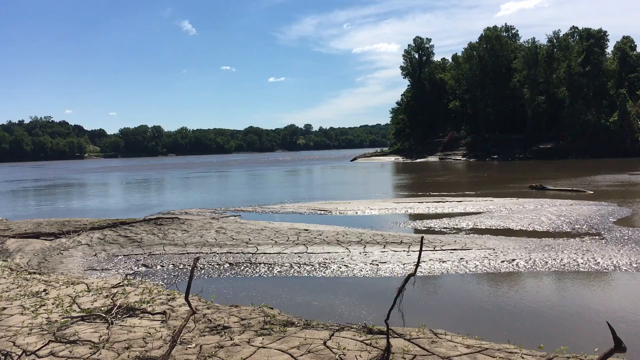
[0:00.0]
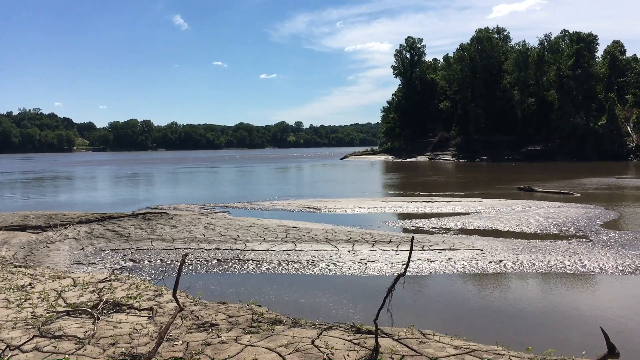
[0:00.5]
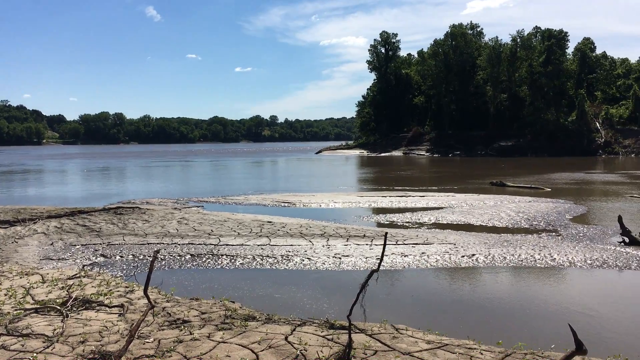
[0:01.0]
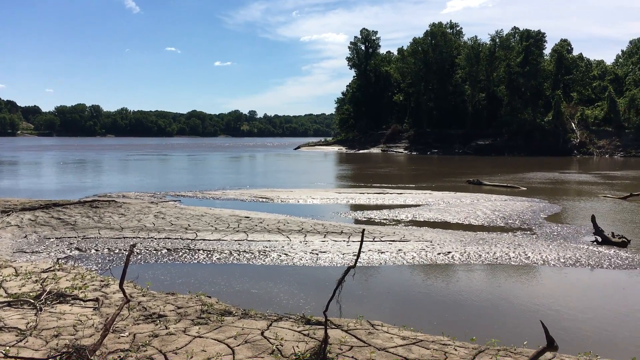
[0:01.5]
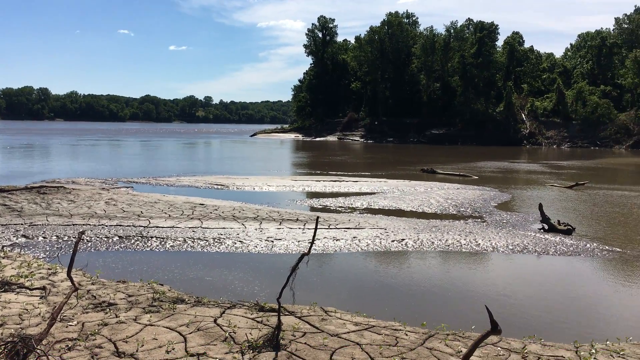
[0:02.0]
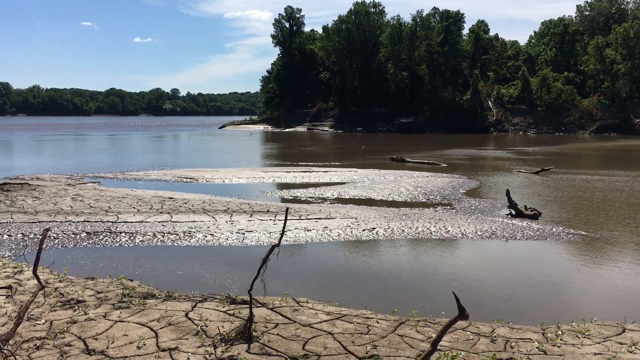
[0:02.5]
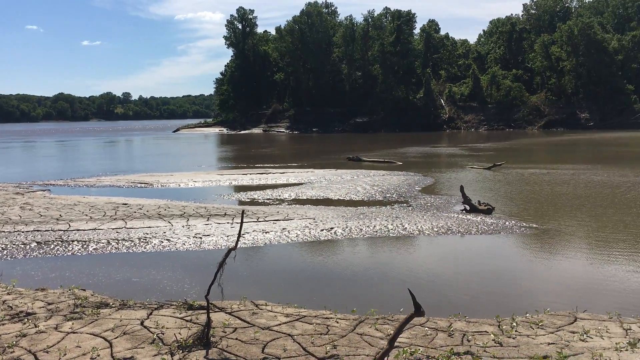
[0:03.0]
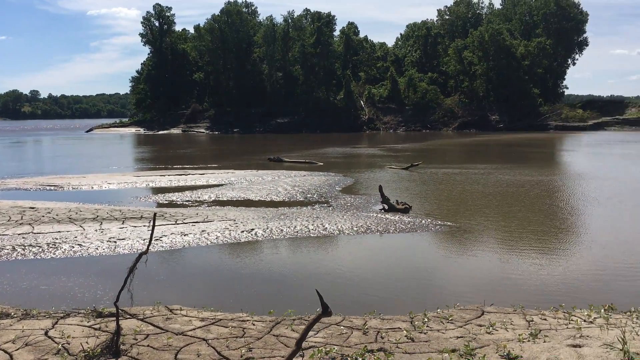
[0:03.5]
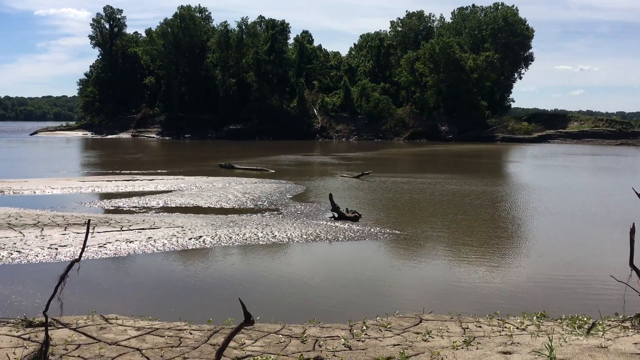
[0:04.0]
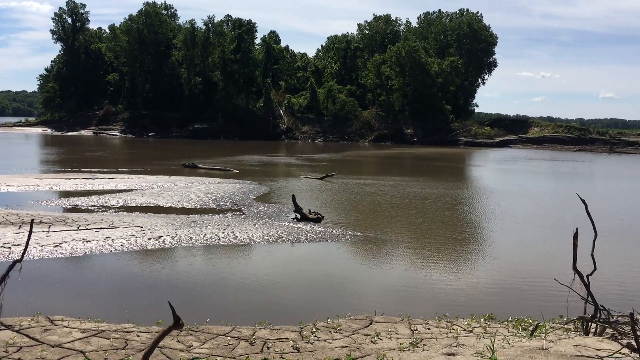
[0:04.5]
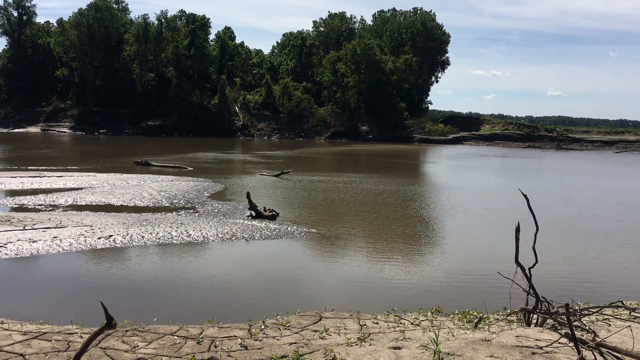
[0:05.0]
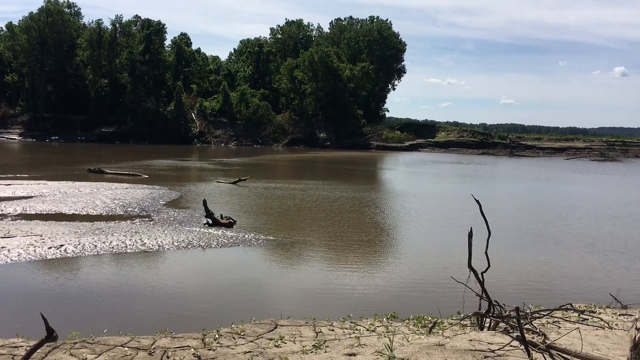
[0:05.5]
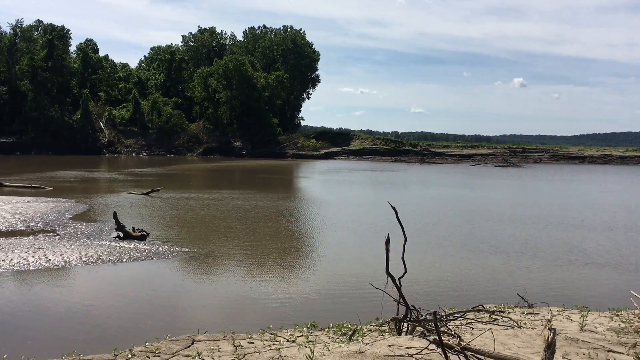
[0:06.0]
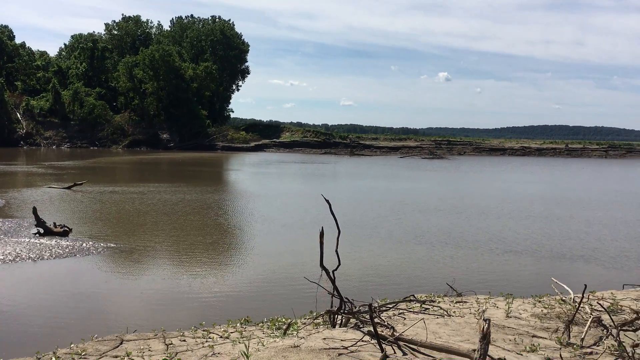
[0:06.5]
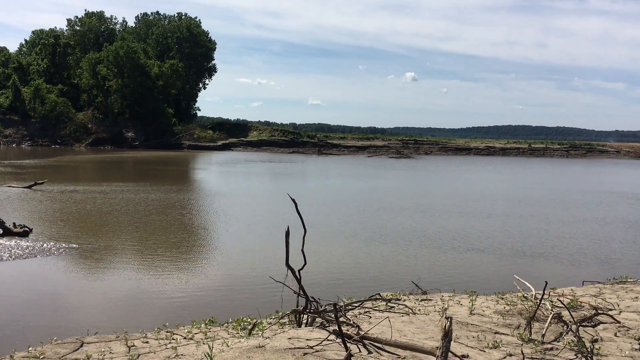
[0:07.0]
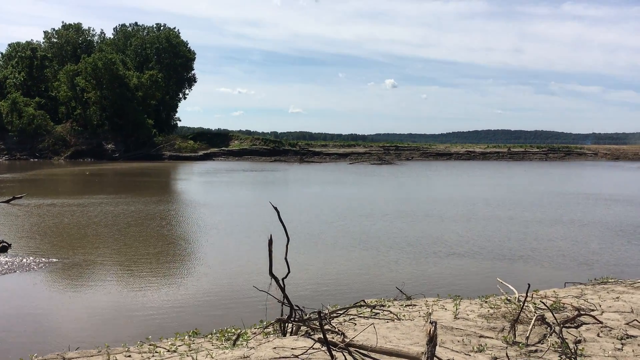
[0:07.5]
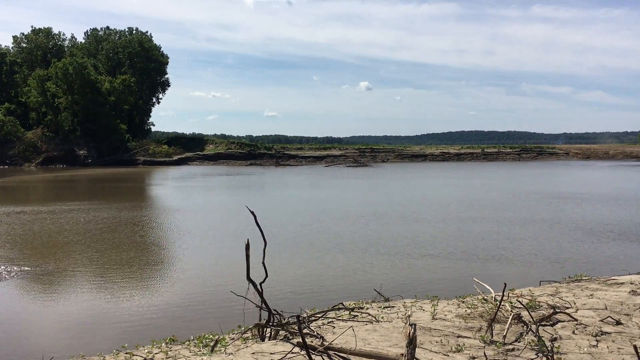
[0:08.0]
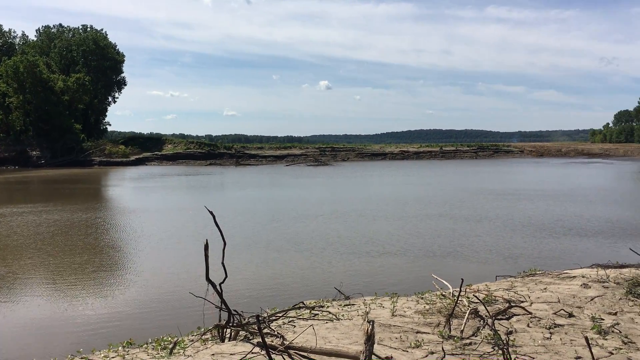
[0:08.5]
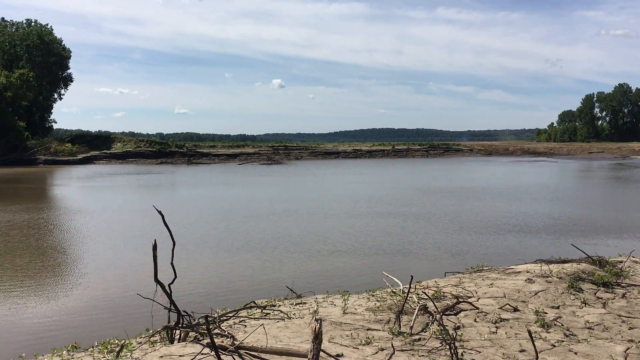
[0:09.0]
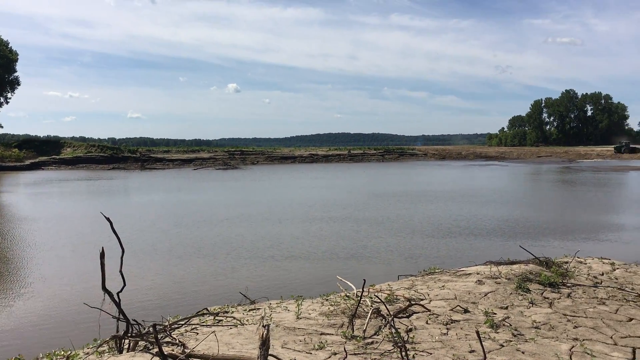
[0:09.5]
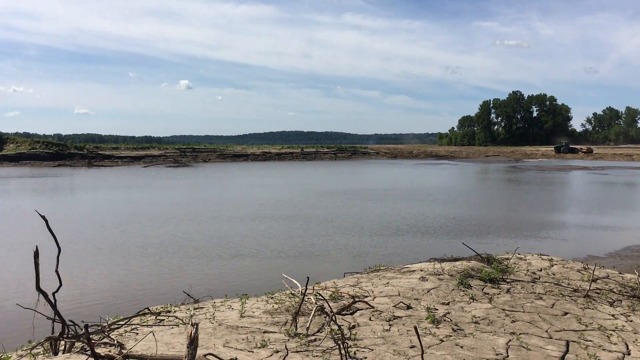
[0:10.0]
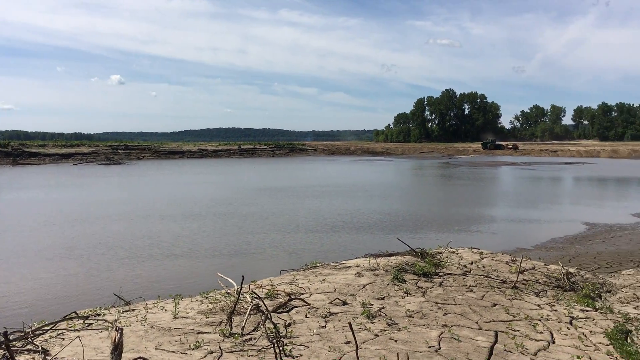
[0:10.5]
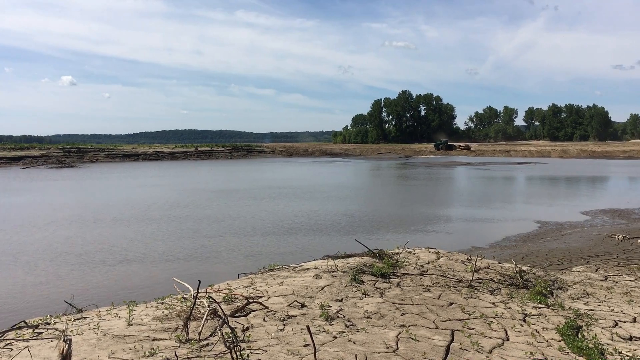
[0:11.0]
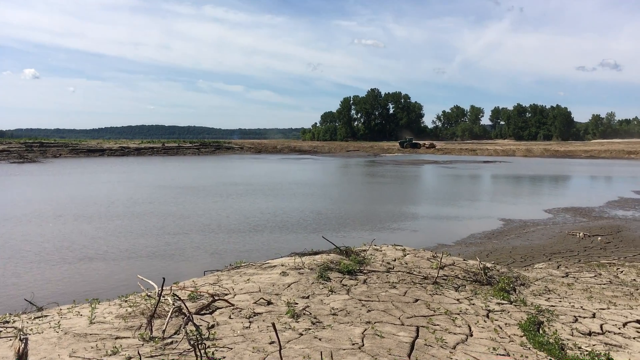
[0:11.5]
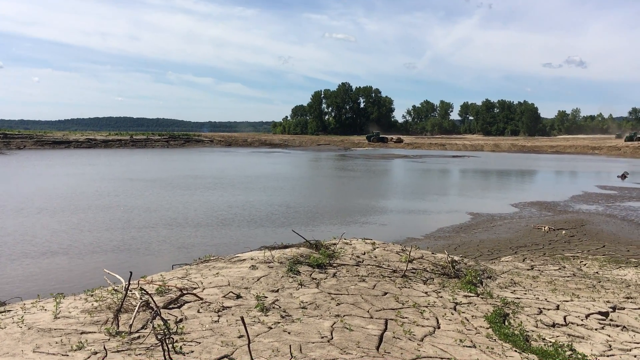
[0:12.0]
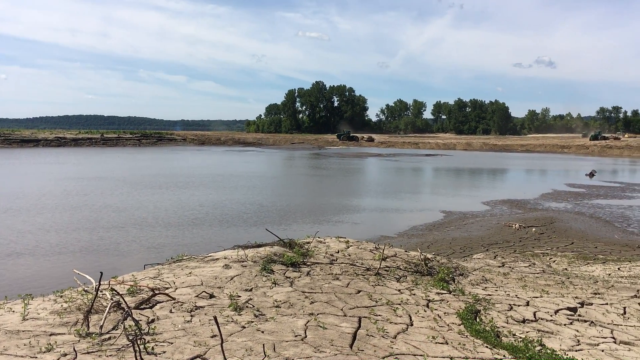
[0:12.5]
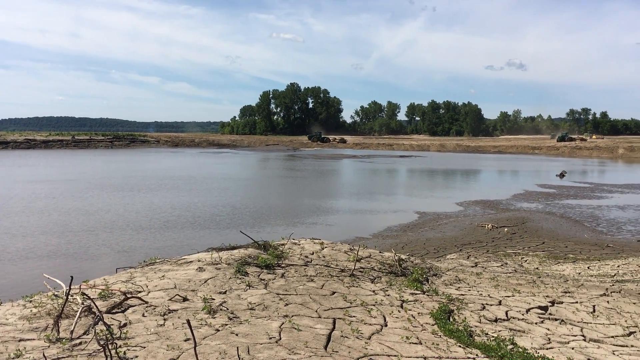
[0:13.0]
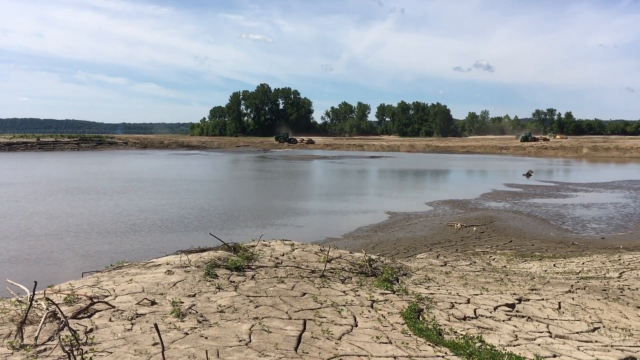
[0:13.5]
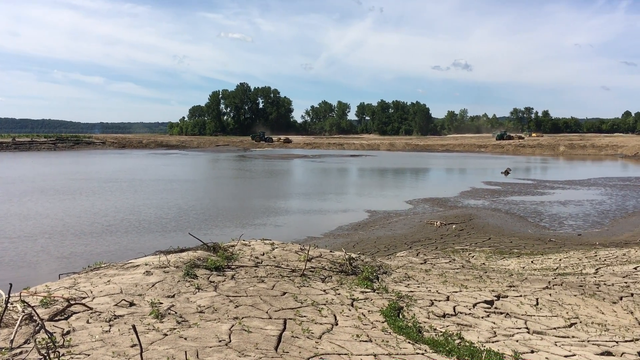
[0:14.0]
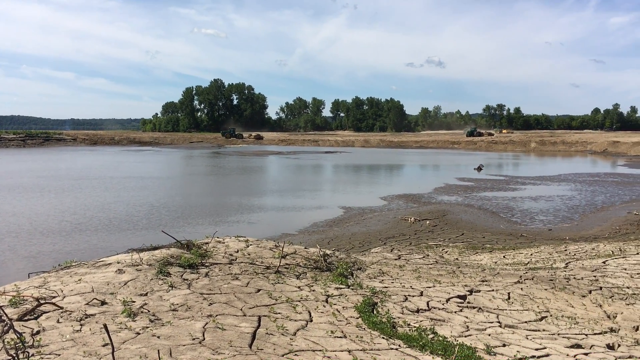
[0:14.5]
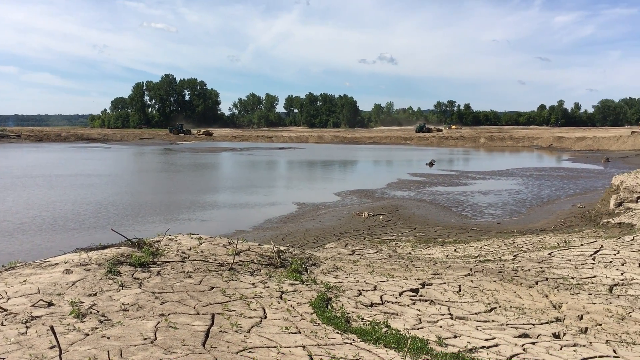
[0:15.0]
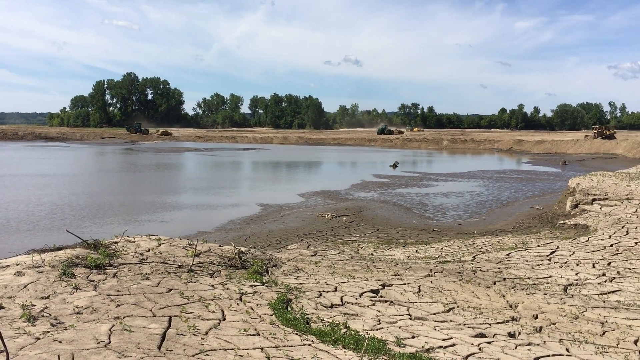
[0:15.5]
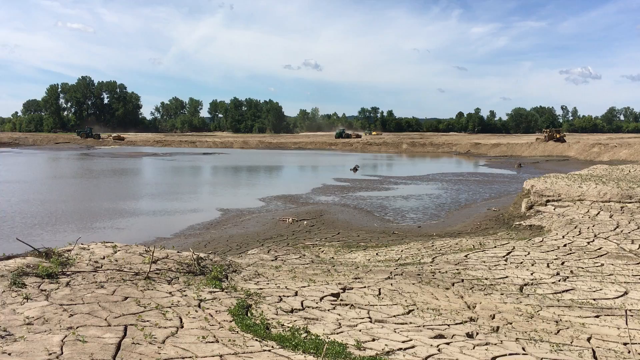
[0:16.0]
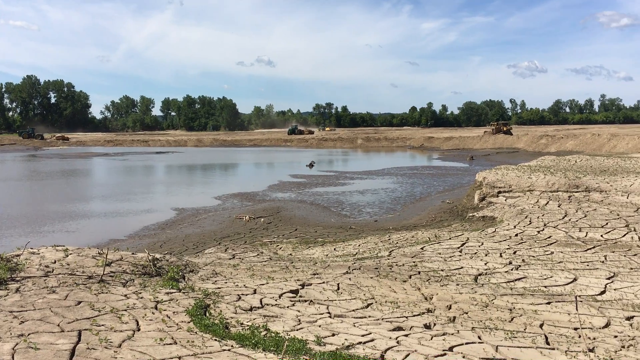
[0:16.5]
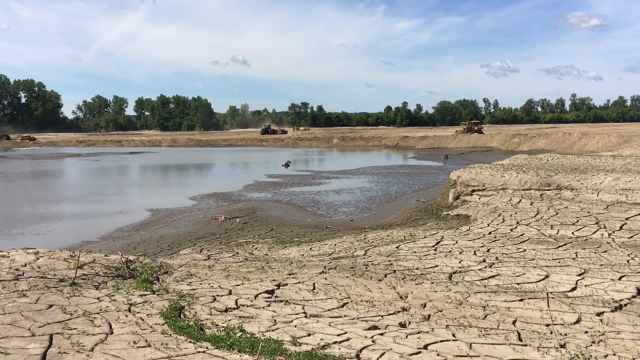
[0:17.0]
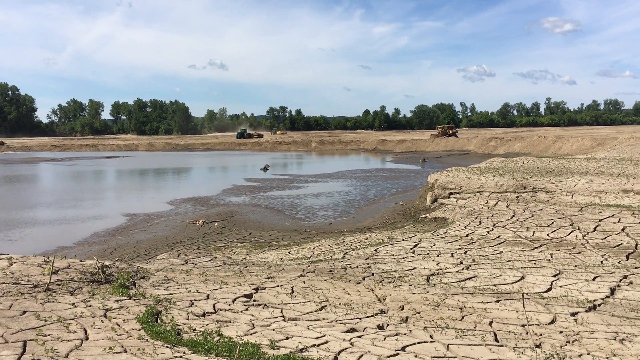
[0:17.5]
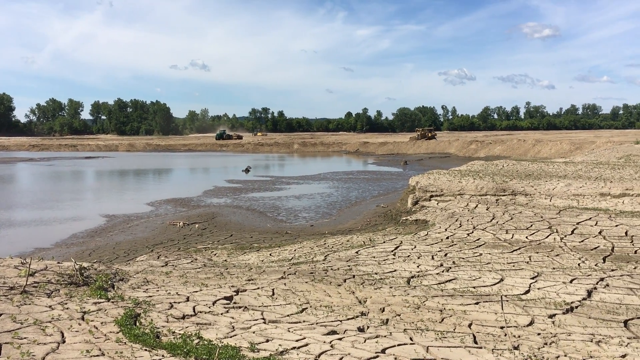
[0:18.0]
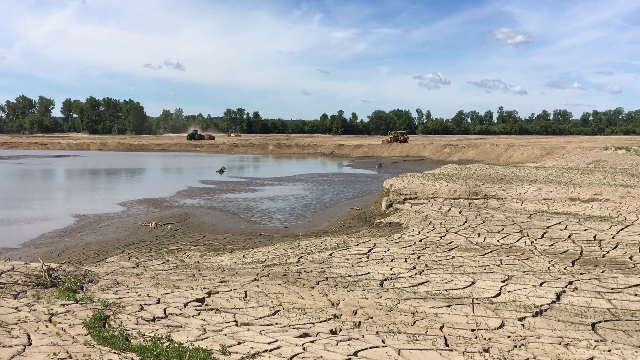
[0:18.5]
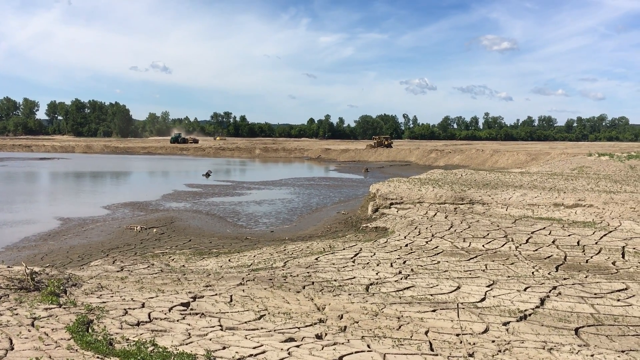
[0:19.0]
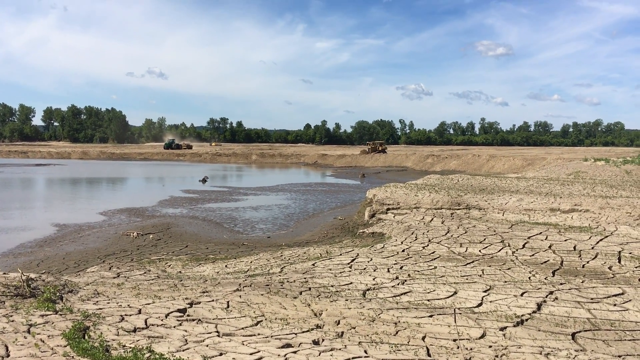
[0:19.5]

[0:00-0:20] Handheld camera footage opens on what seems to be a lake, apparently a fairly dirty one, almost as if surrounded by desert on the right-hand side. The camera person pans to the right, revealing machines running on the land in what looks like some sort of excavation activity. The vehicles head from the center toward the upper left of the screen. On the left side of the screen, decayed sticks are on the ground in front of the camera person, and the ground has patterns on it, with lots of cracks.